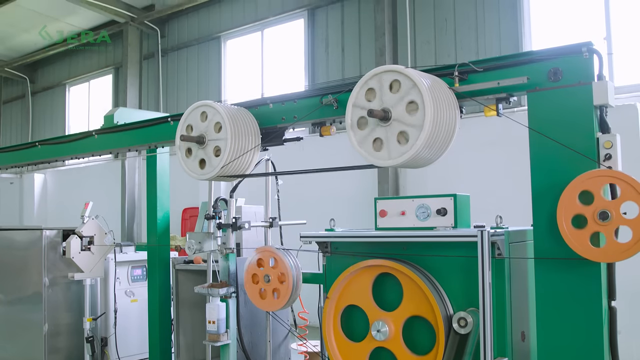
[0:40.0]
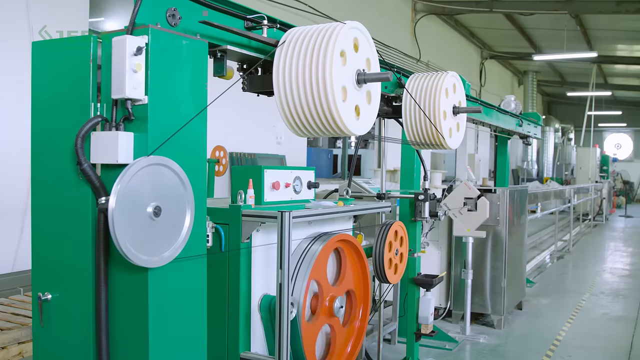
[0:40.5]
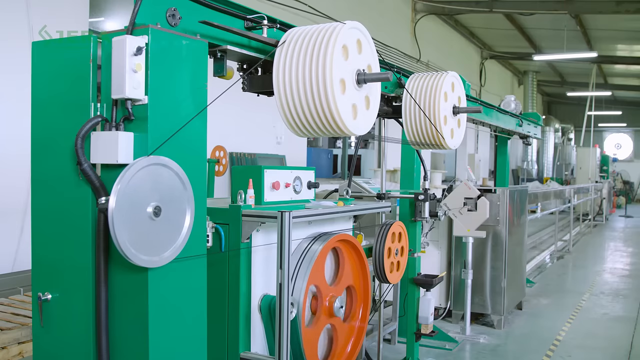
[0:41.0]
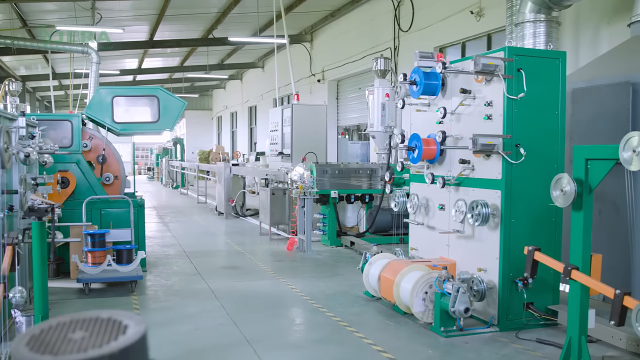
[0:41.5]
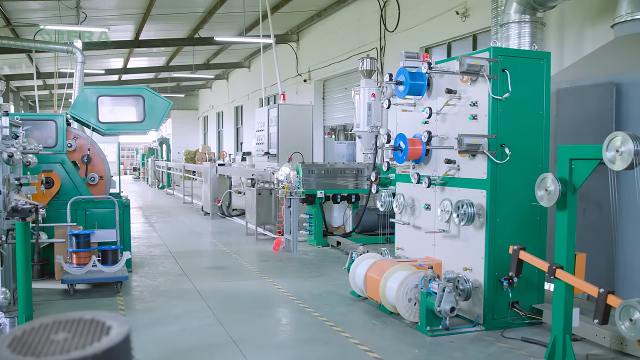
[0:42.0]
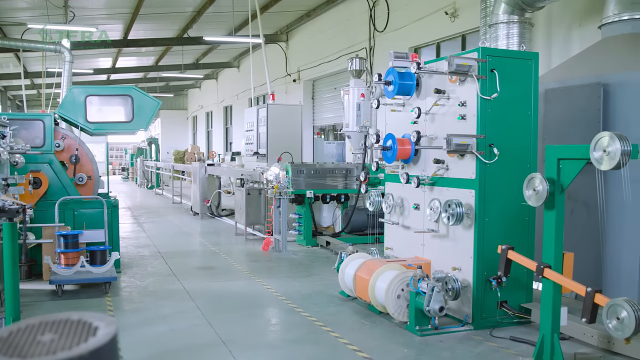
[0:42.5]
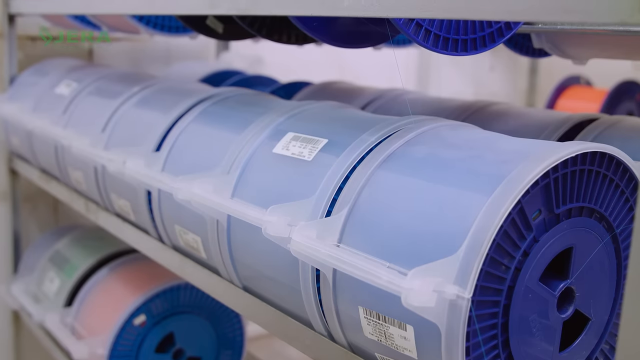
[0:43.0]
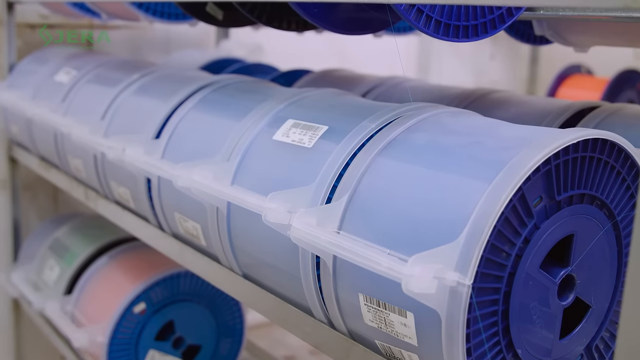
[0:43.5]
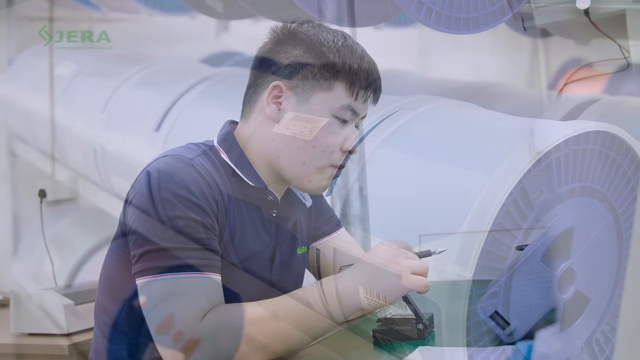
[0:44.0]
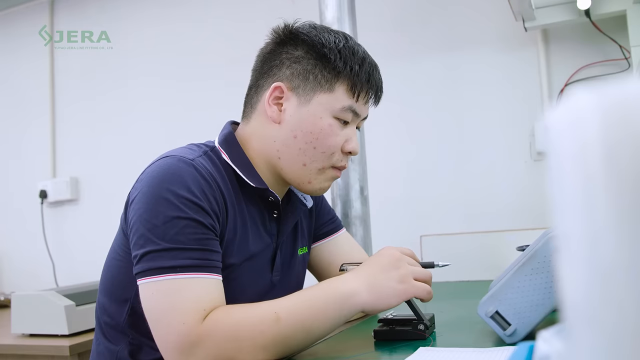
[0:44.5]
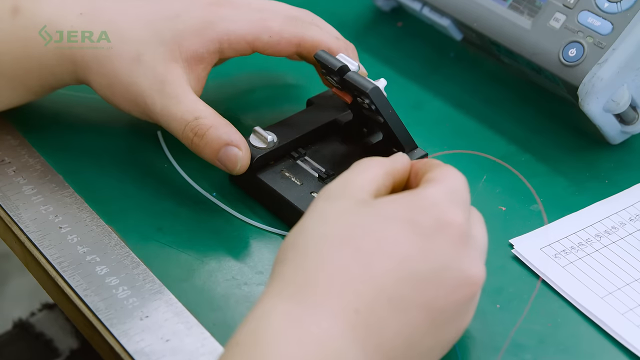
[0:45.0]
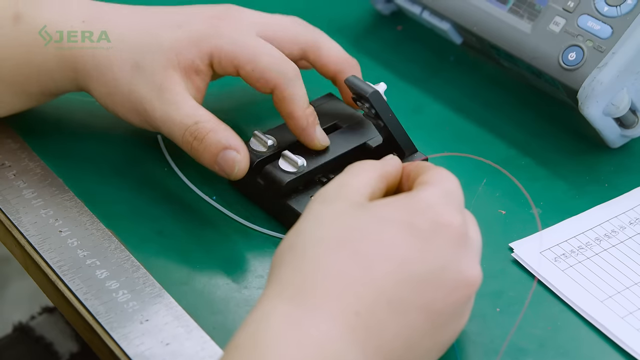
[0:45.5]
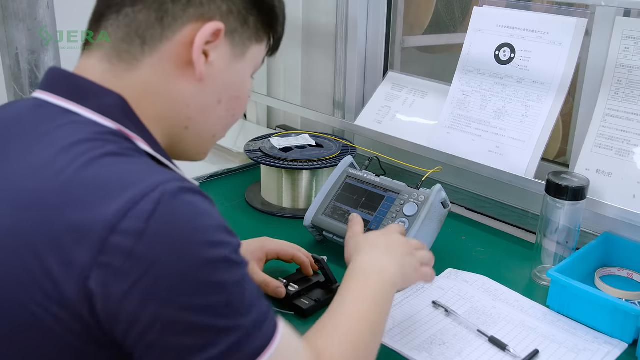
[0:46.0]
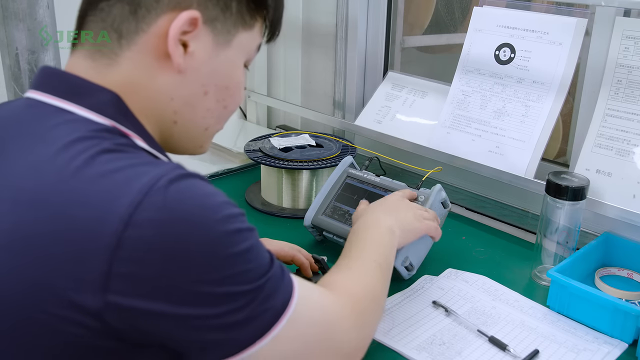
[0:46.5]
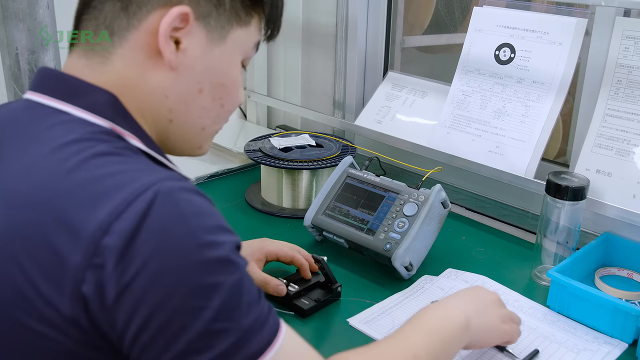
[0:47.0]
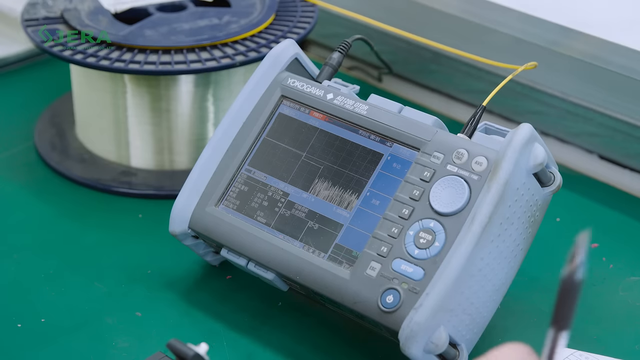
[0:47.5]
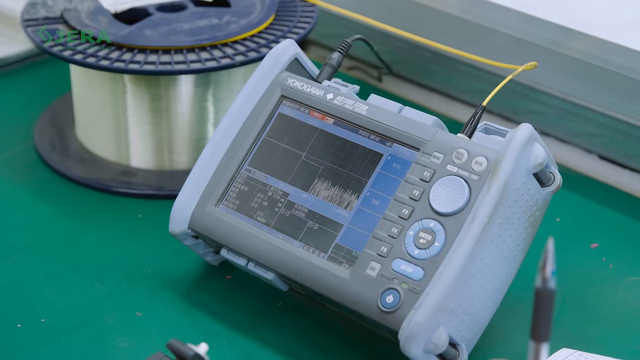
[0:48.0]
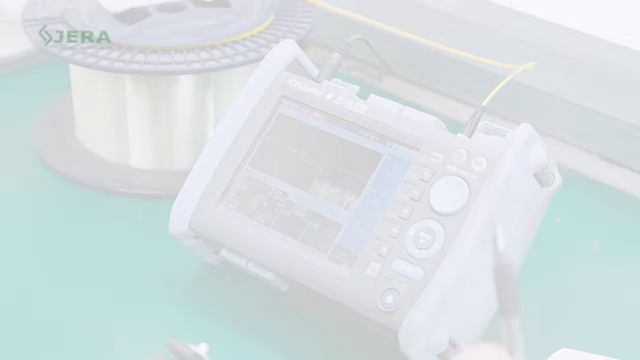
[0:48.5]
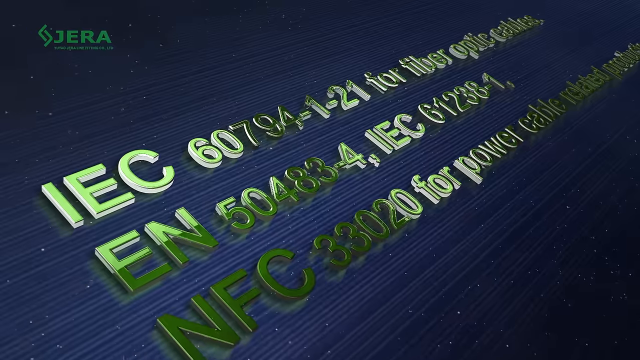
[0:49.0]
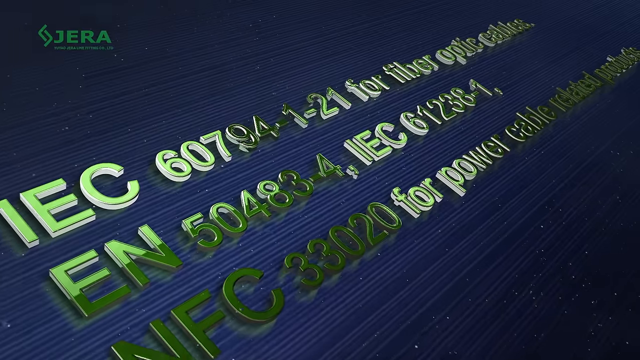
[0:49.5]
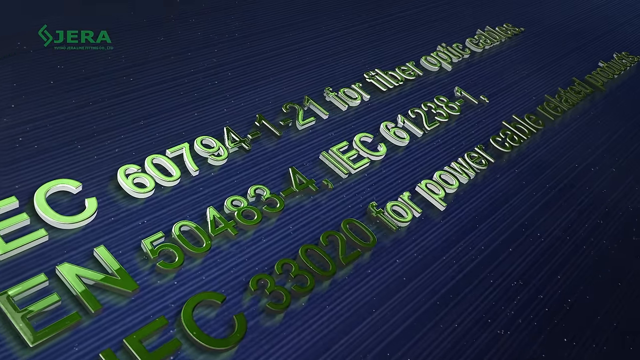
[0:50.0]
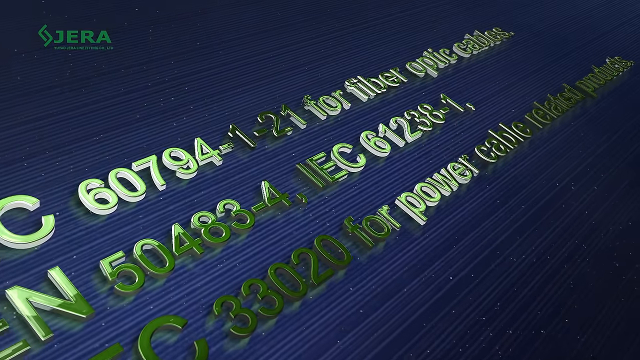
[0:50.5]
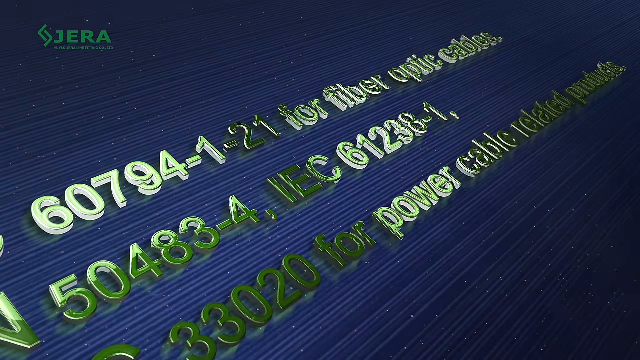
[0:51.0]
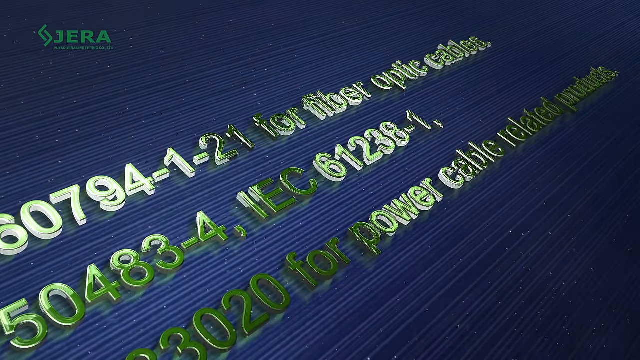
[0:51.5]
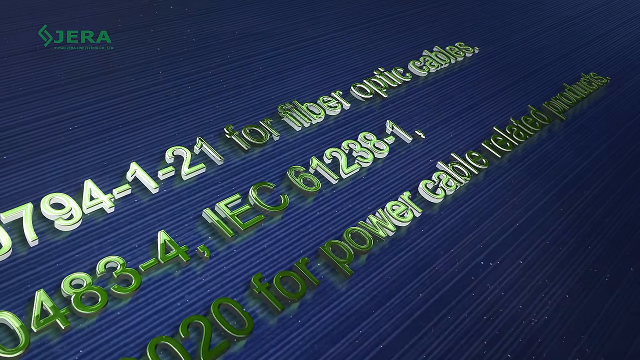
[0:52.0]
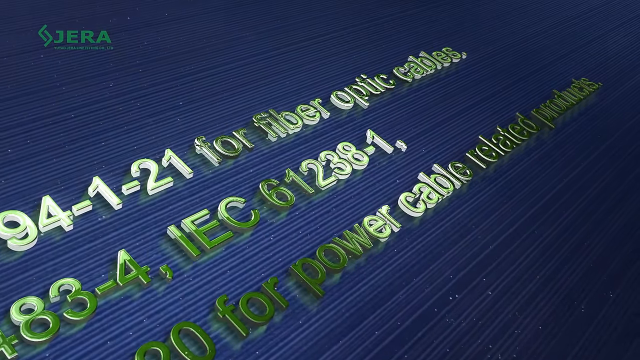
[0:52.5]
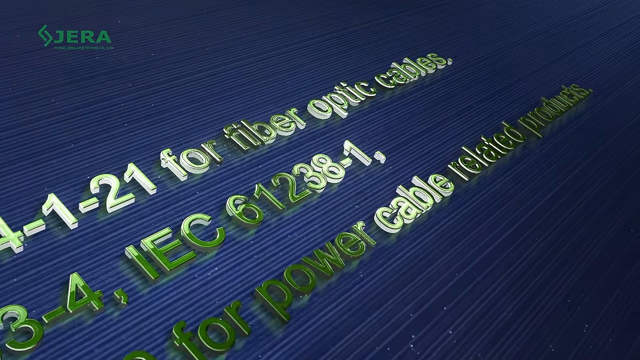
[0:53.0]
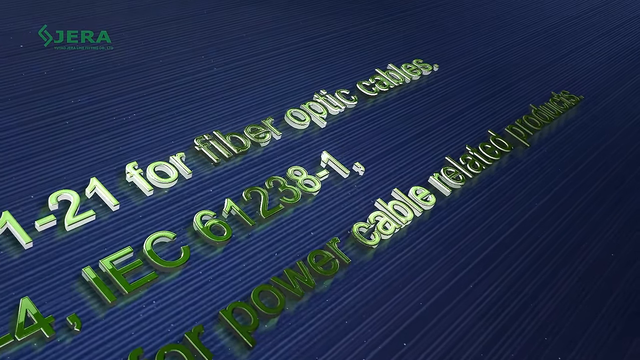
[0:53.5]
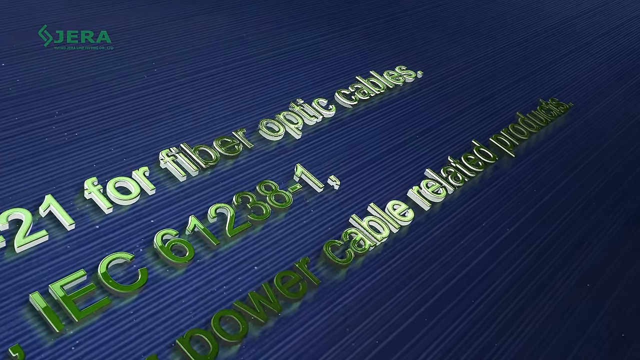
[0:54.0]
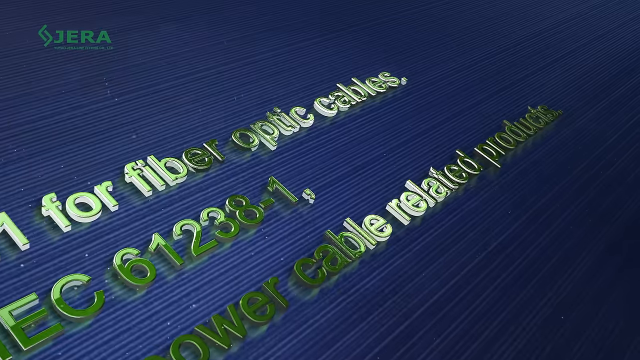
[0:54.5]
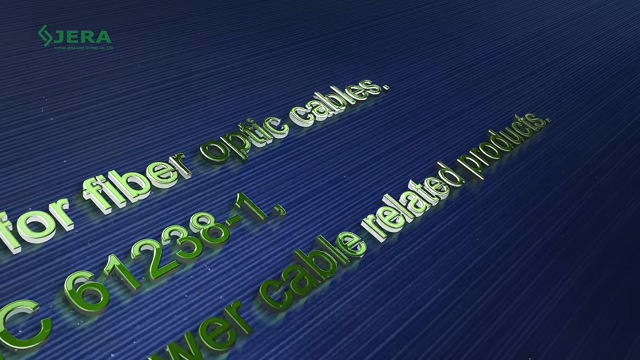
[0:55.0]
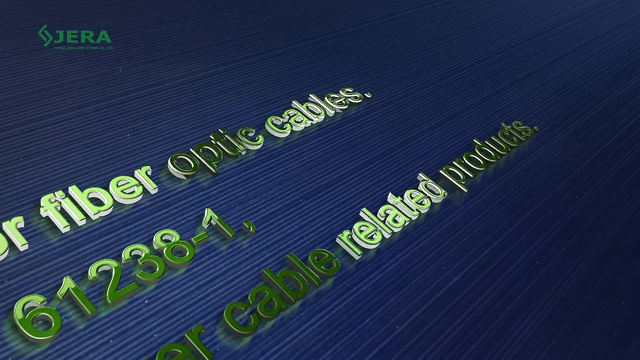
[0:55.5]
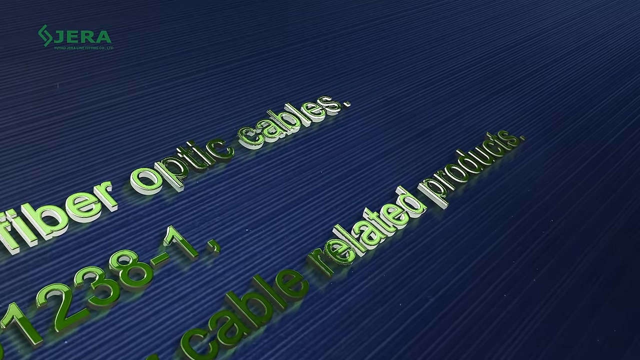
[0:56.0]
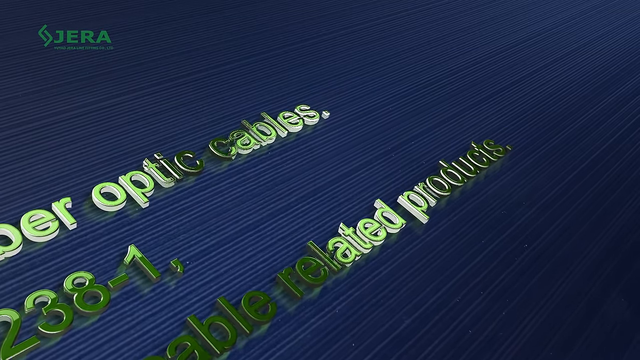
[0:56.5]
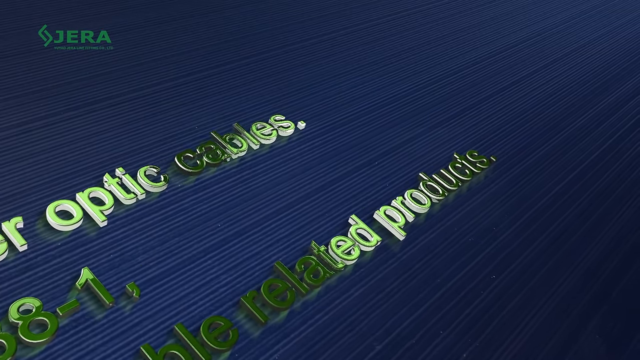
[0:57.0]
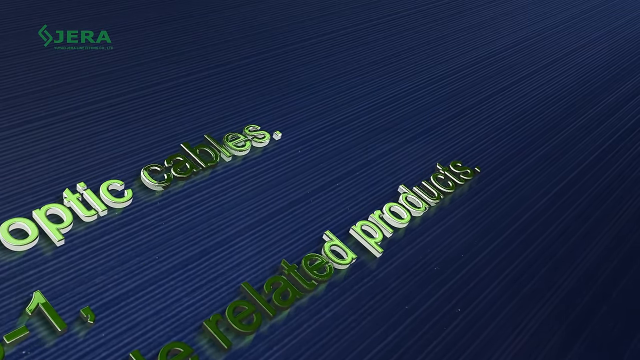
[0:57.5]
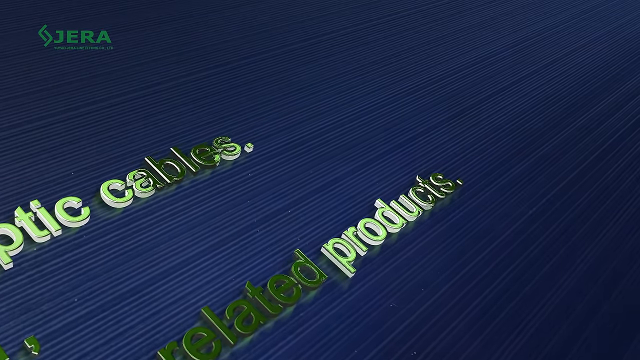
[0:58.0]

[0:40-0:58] In the lower left is a small black box saying that this is a promotional video sponsored by the company, and the brand Jarrah is still visible. The video focuses on a technician sitting in front of what look like different devices, making alterations to the settings, and also sitting with what look like mechanical clippers, perhaps to adjust, cut or bend the cables in some way. Toward the end, a blue background with gold writing briefly interrupts the video; the writing possibly refers to the brand.